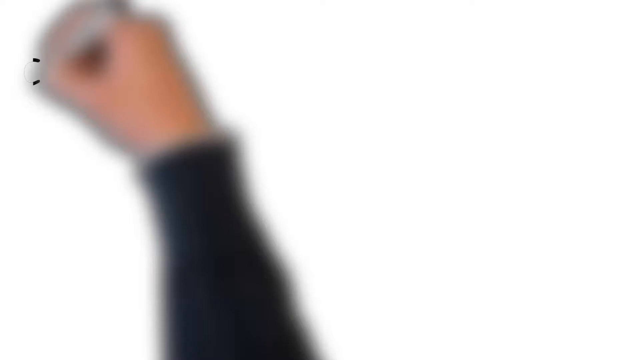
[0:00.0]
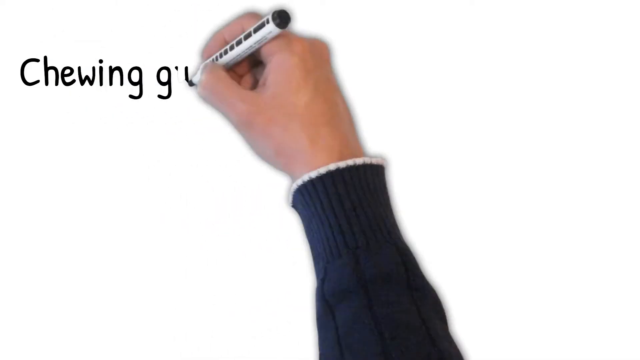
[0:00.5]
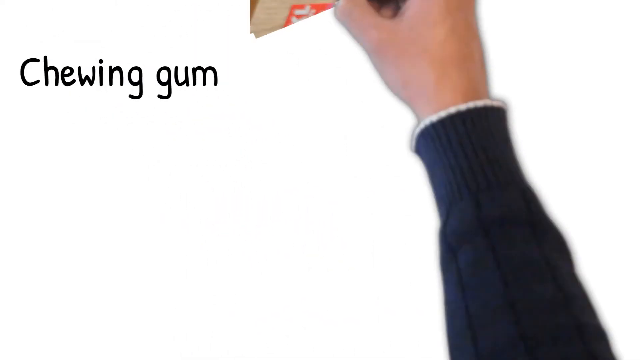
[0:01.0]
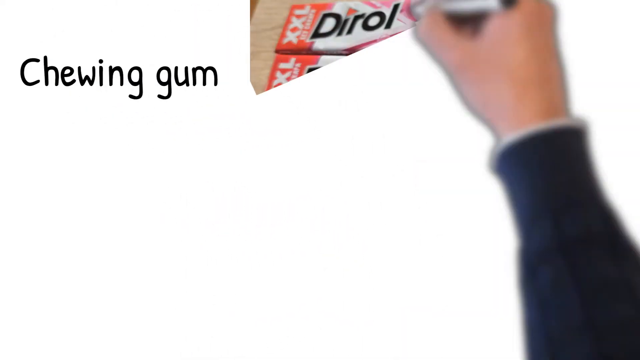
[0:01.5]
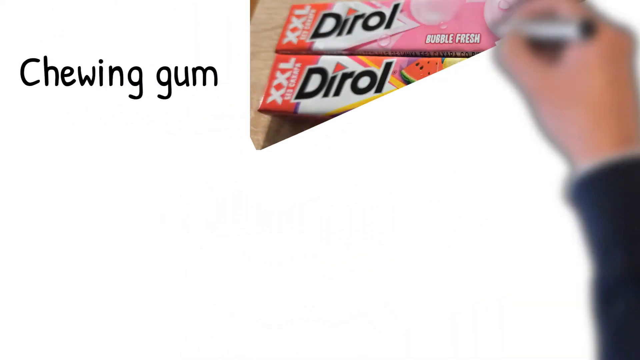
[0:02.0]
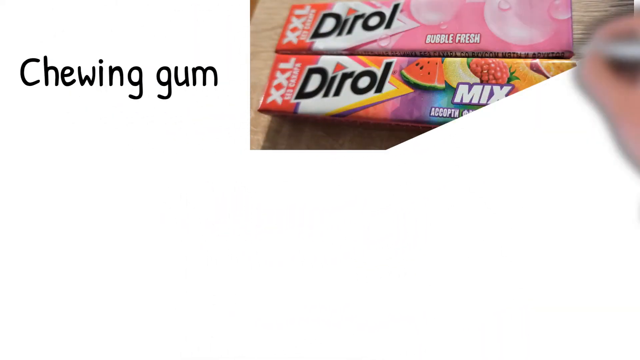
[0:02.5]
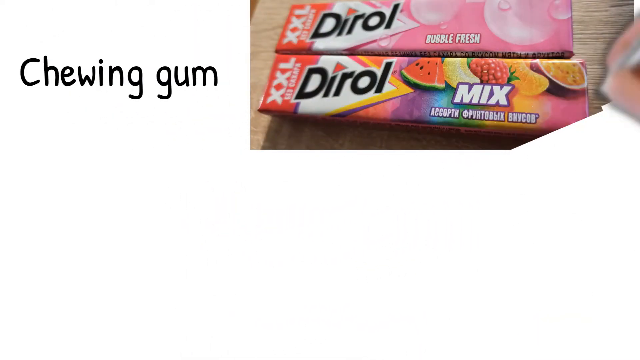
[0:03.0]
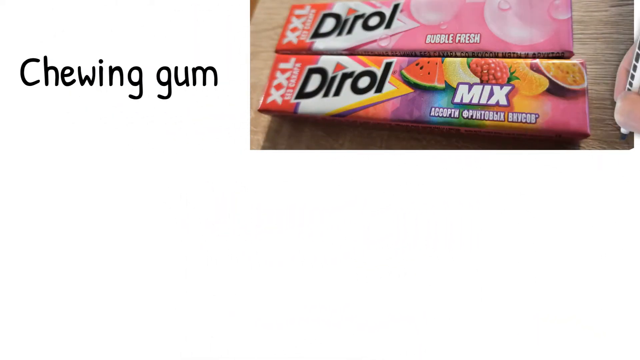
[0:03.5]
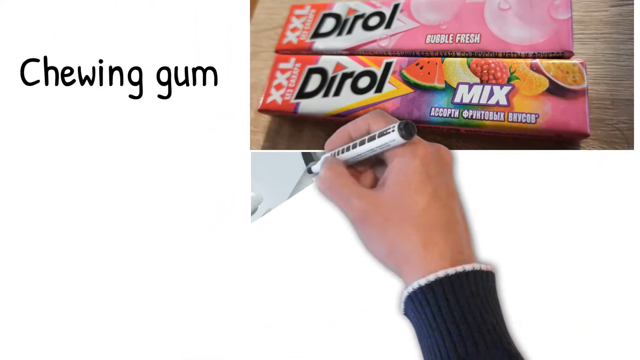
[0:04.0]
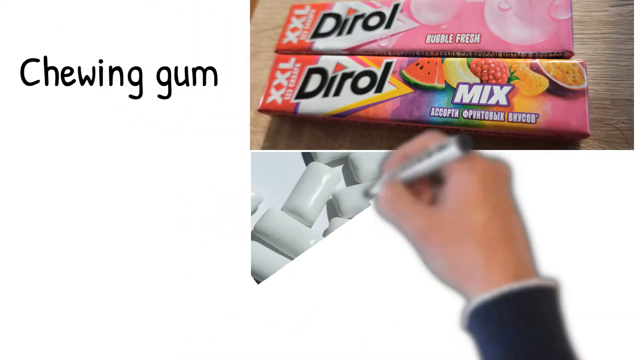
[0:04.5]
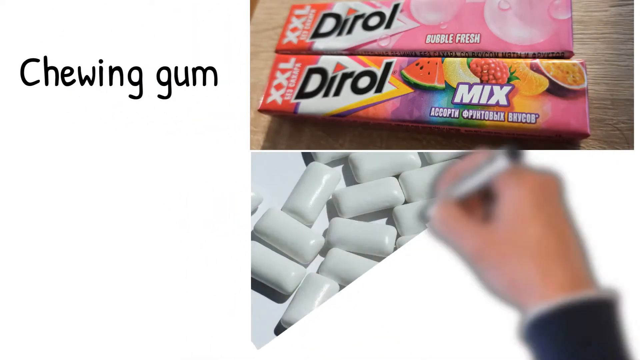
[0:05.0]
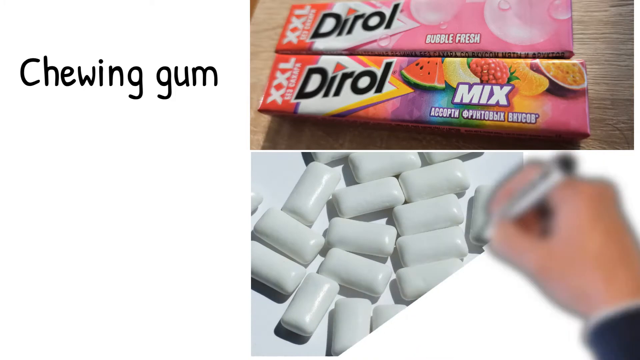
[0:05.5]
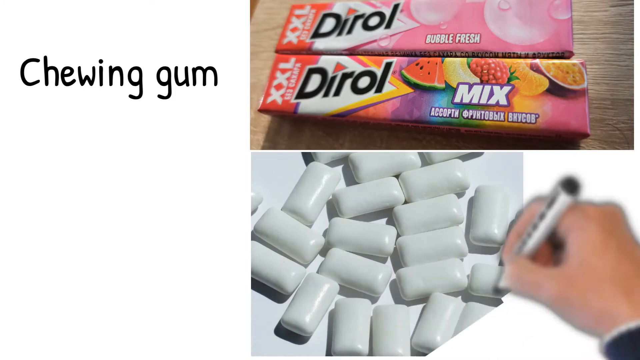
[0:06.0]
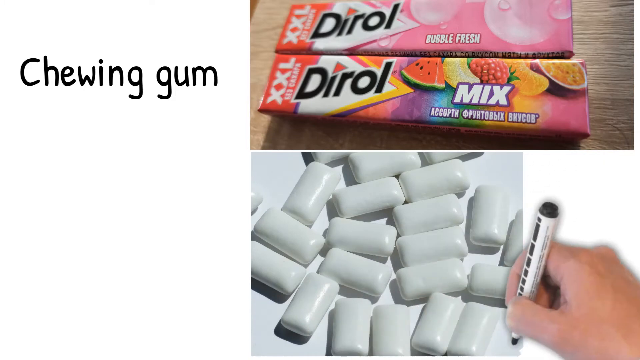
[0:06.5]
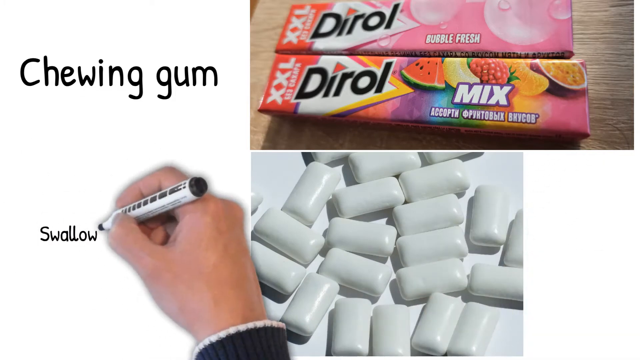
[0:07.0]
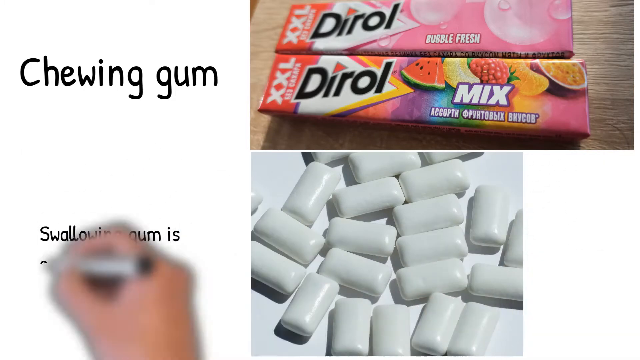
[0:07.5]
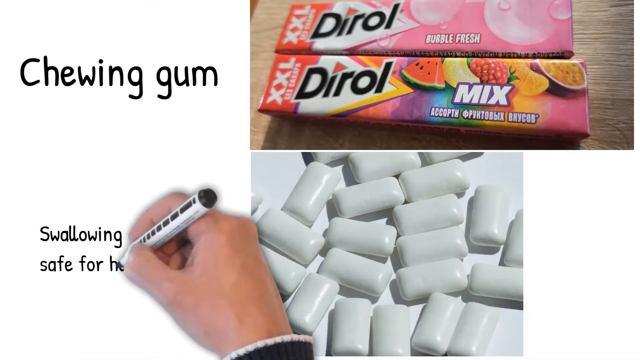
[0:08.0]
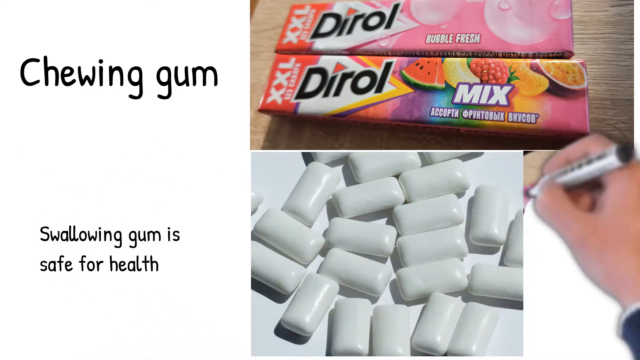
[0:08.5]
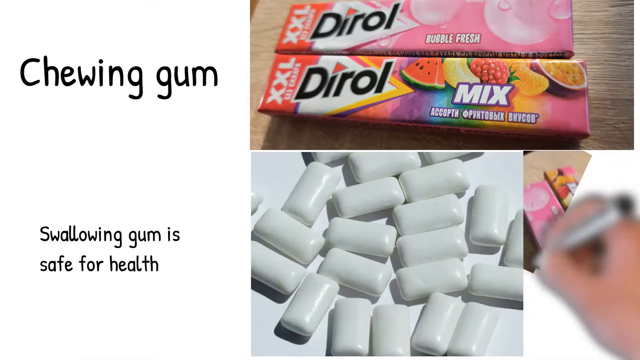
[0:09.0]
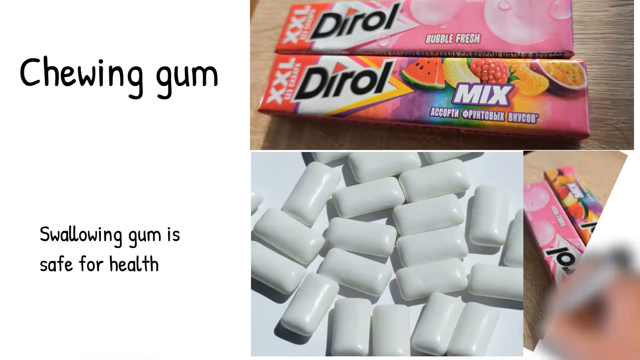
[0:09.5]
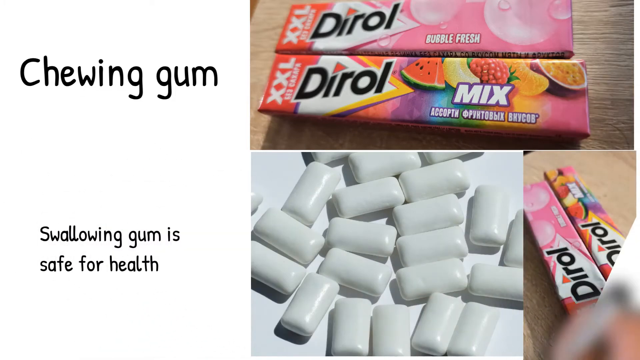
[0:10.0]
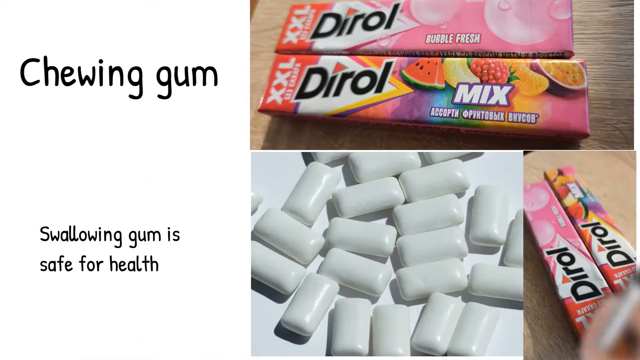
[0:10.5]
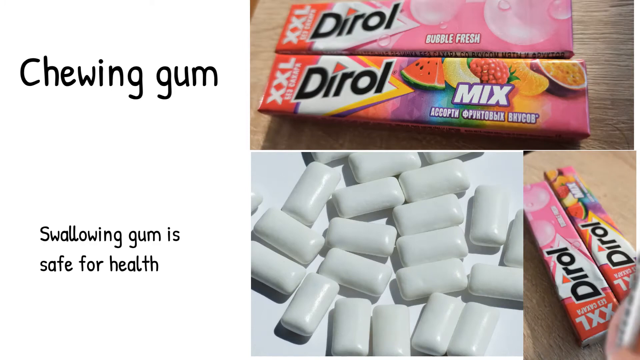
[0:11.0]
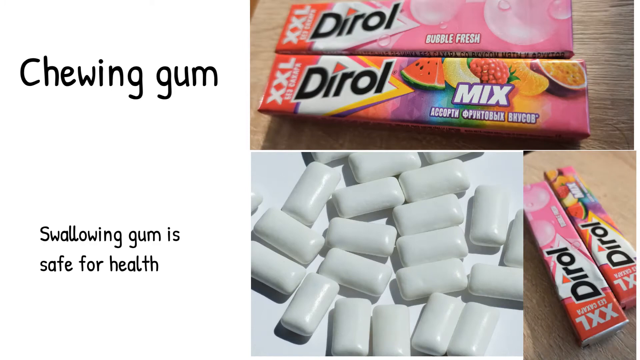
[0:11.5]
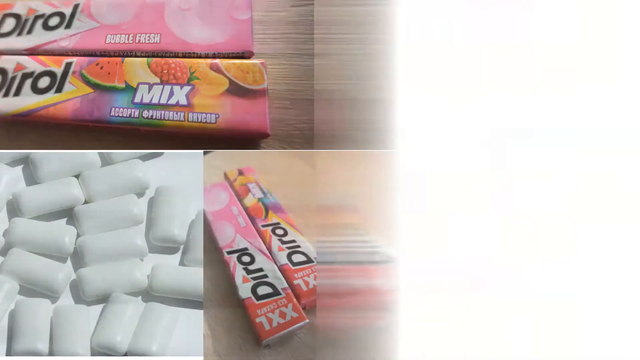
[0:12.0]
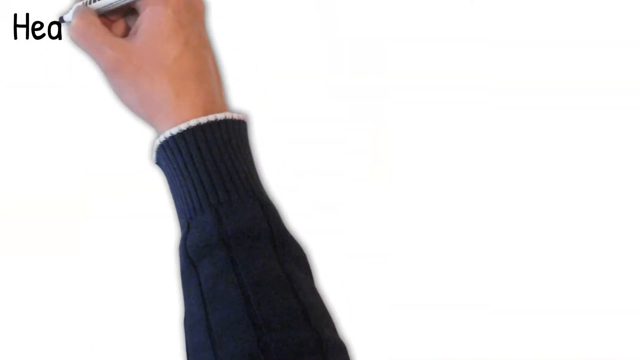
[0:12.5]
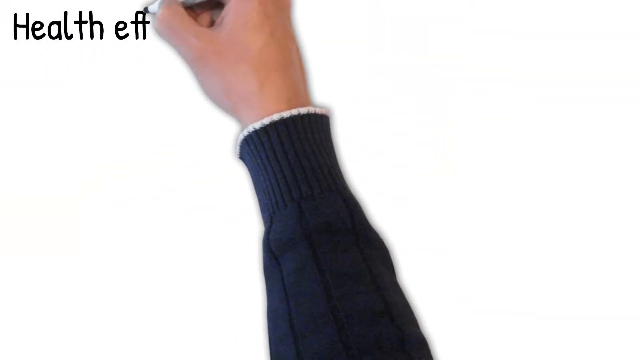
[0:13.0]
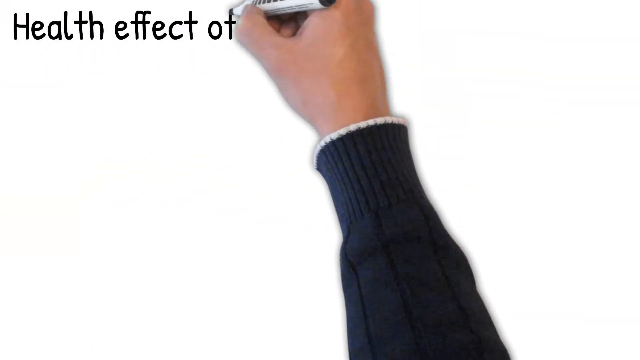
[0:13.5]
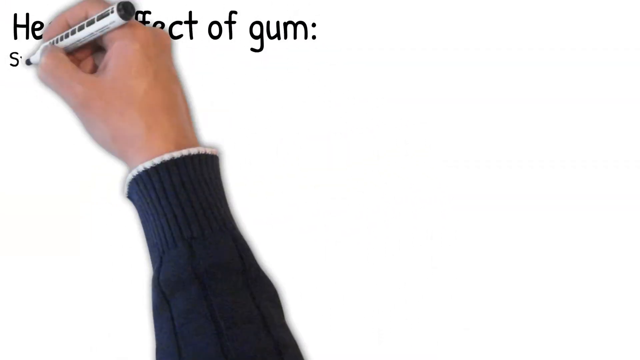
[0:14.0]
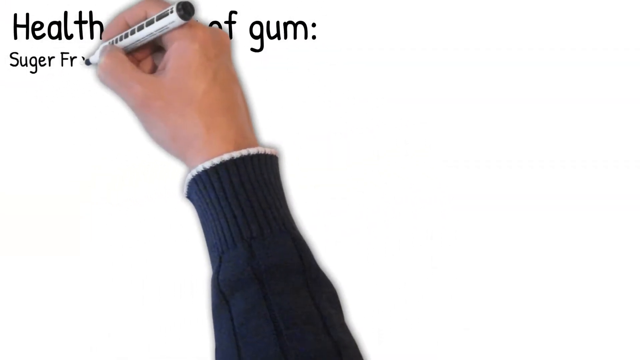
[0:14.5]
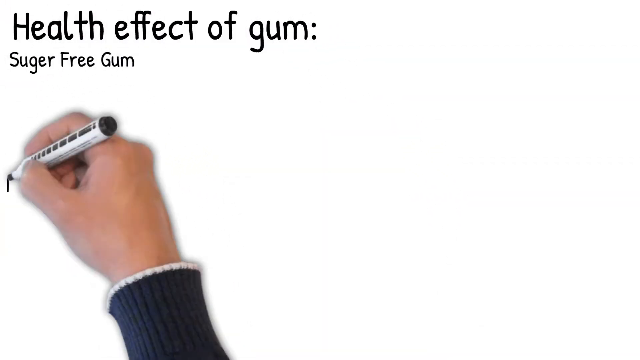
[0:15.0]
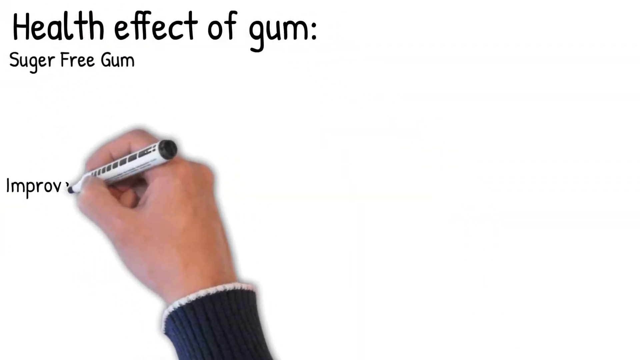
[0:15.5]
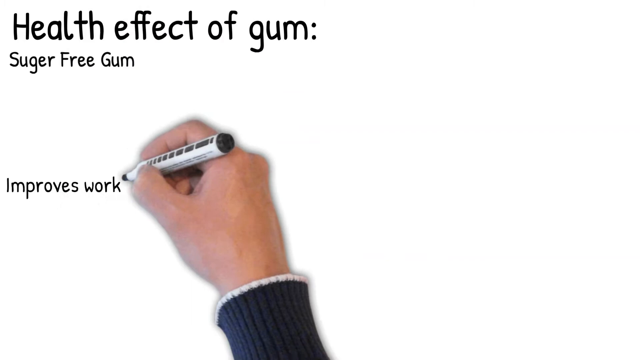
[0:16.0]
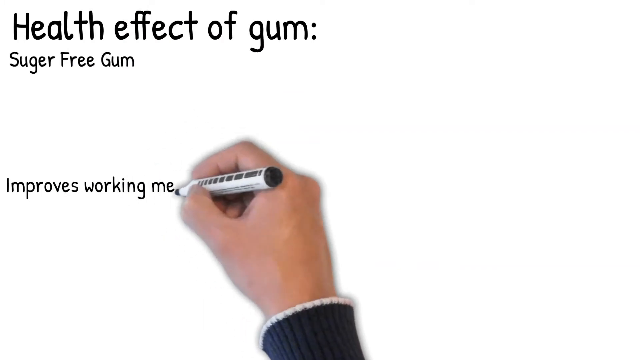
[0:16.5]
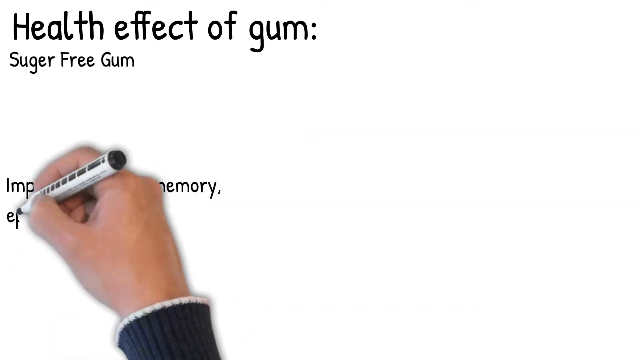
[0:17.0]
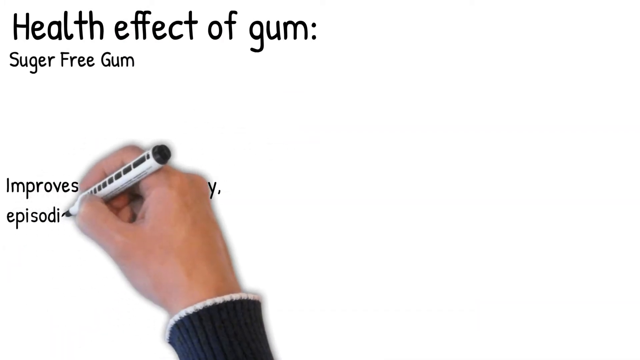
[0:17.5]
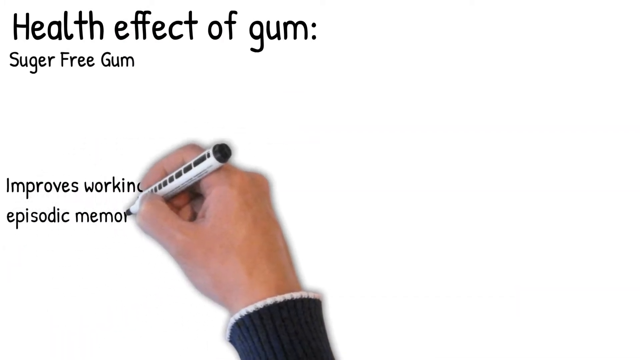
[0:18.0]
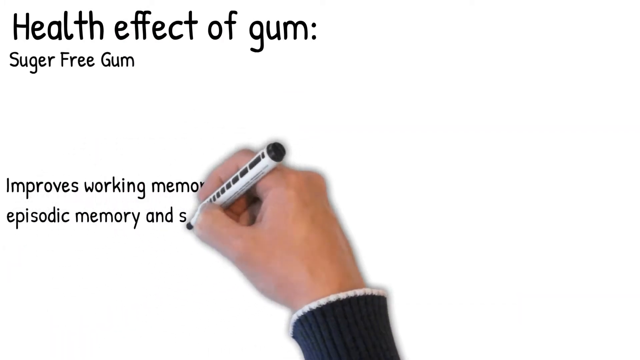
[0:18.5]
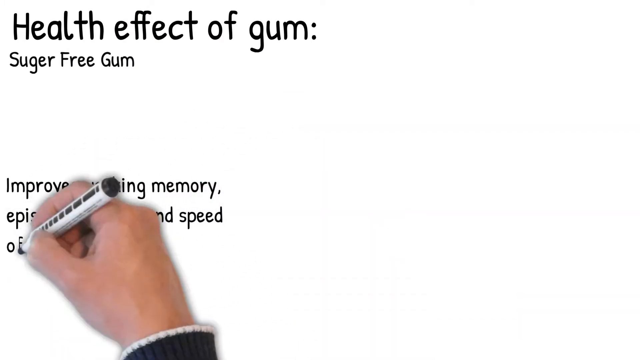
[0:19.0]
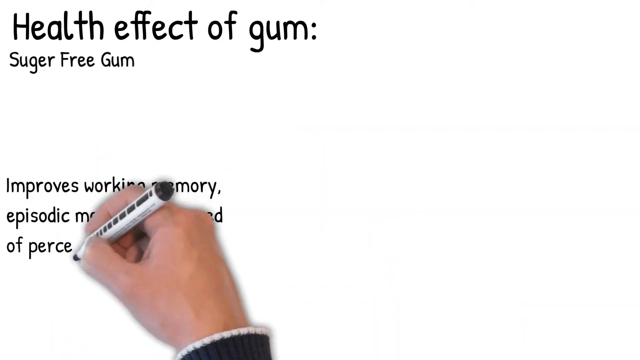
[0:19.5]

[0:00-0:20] The video starts as a plain white board. On the left-hand side of the image, a white hand holds a black marker pen in its right hand, resting the pen against the side of the palm and gripping it with the index finger and thumb. The arm wears a blue jumper with a white trim. The image moves across the screen as if the hand is writing, and handwriting-style text reads "chewing gum". The hand then goes to the right of this text and begins to scribble, and underneath the scribble a picture of two packets of chewing gum appears: the top packet is a bubble fresh flavor and the bottom packet is a mixed fruit flavor. The hand moves below this image and scribbles again, going from left to right in a diagonal motion, and a pile of chewing gums outside of their packets appears. To the left of this image of the chewing gum, the hand writes again: "swallowing gum is safe for health". To the right of the gum image, the hand scribbles in the same left-to-right diagonal pattern and an image of two gums appears. The image then slides to the left, almost like a slideshow. The hand appears again and writes: "health effect of gum, sugar-free gum, improves working memory, episodic memory, and speed of perception".